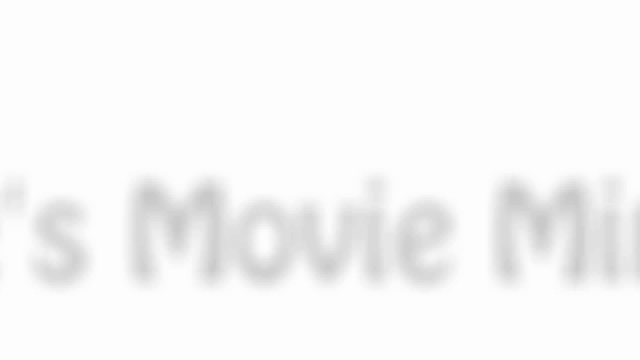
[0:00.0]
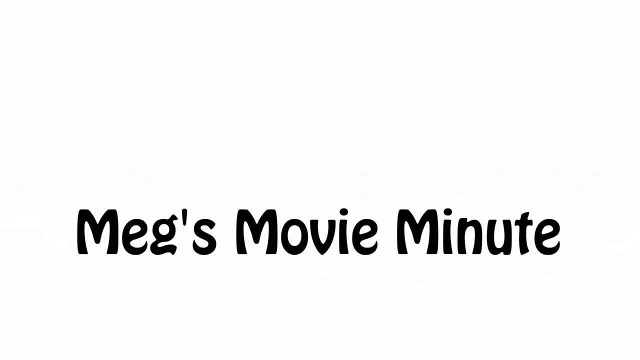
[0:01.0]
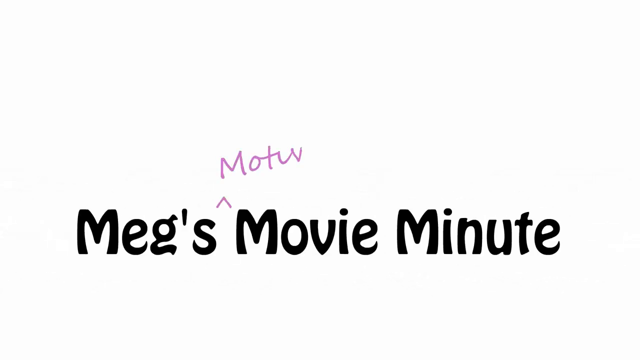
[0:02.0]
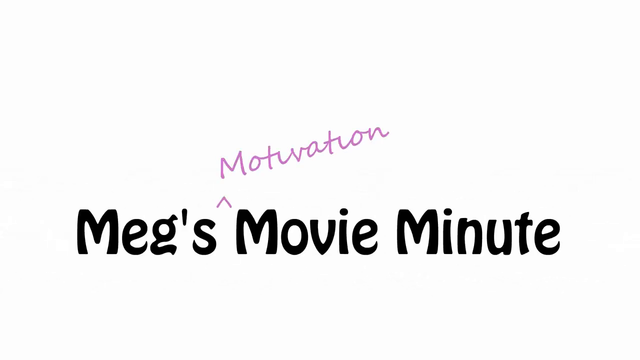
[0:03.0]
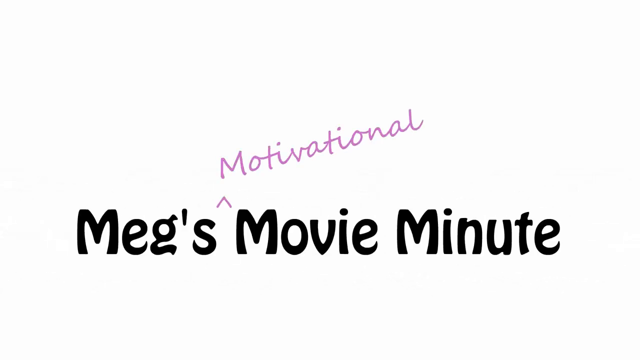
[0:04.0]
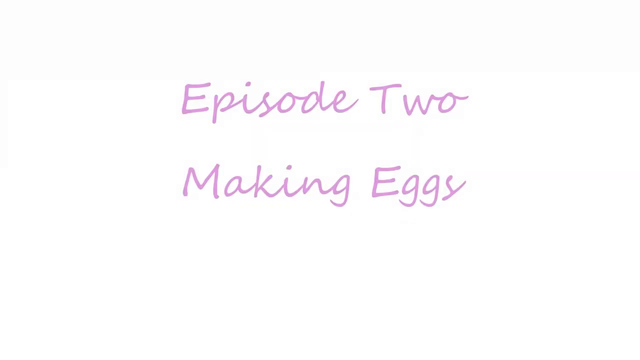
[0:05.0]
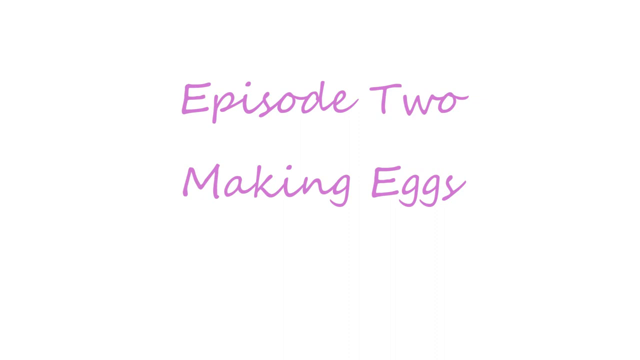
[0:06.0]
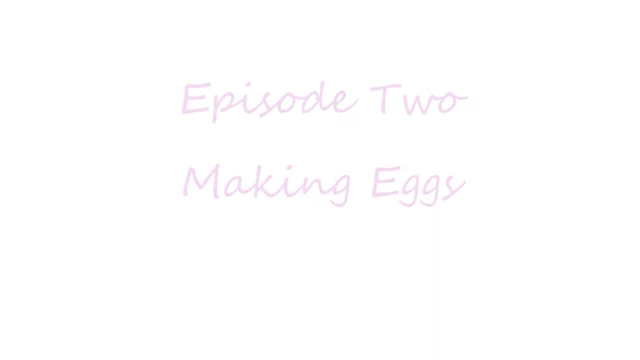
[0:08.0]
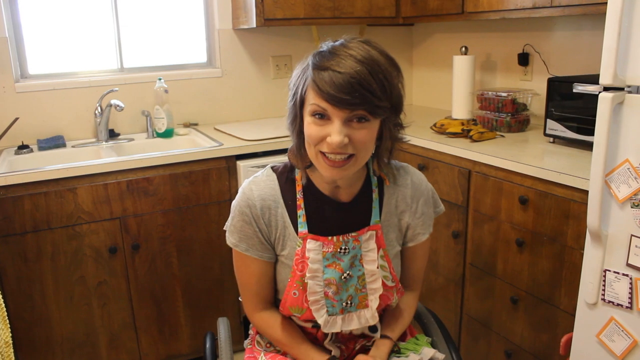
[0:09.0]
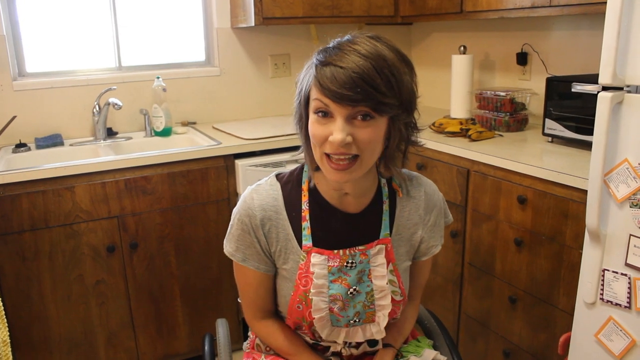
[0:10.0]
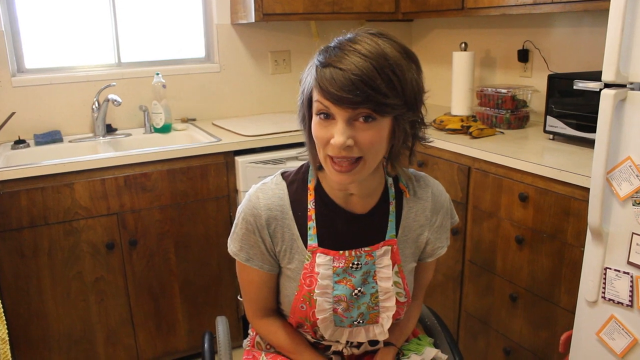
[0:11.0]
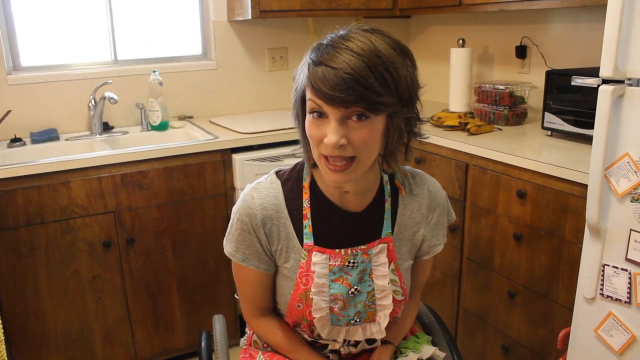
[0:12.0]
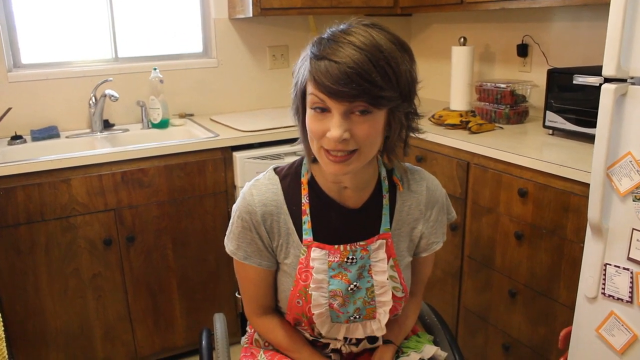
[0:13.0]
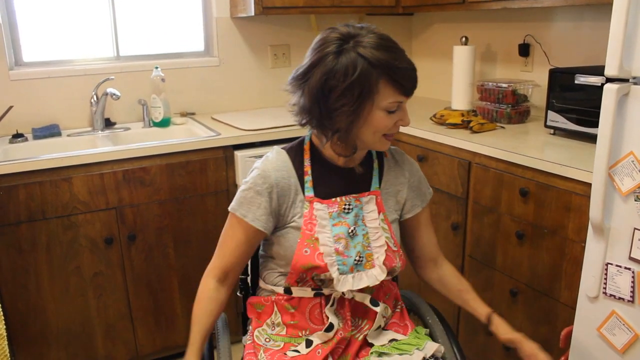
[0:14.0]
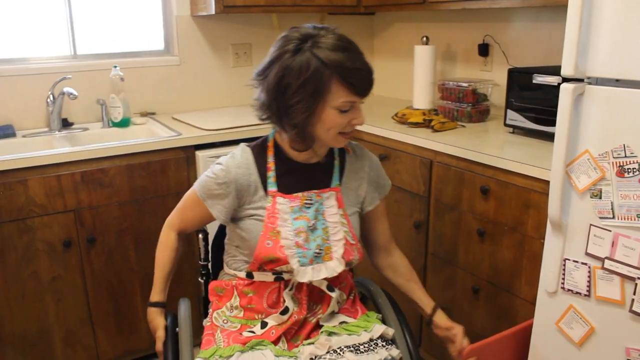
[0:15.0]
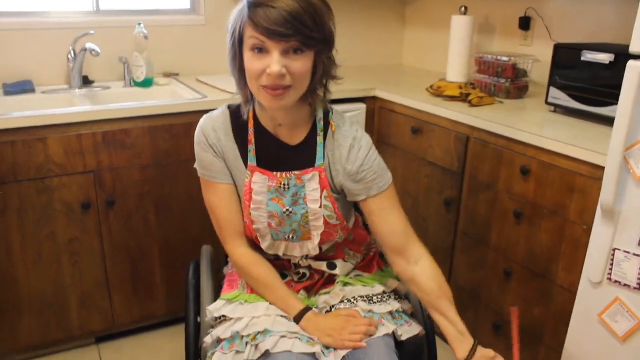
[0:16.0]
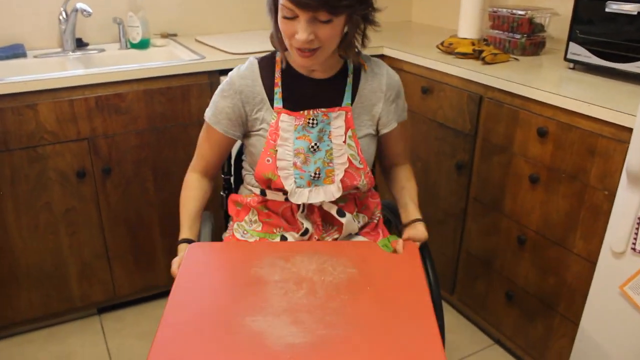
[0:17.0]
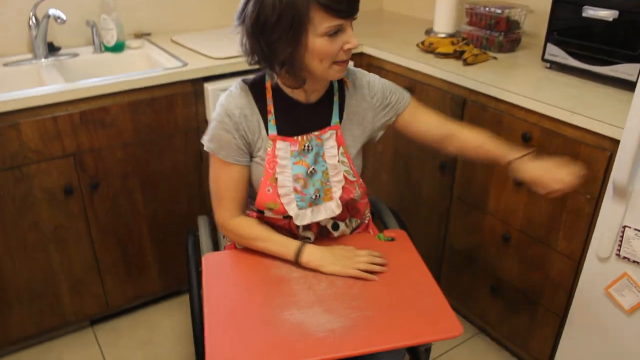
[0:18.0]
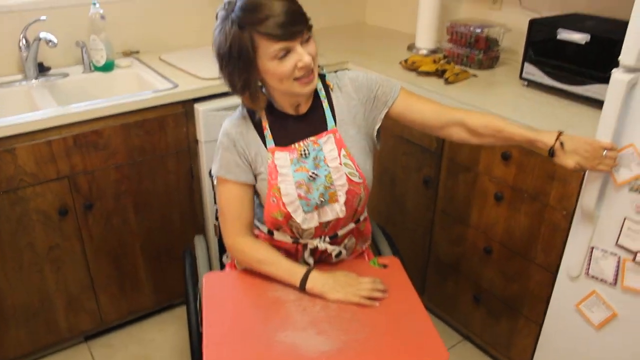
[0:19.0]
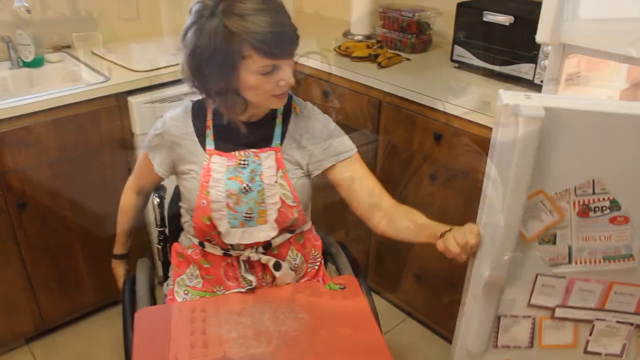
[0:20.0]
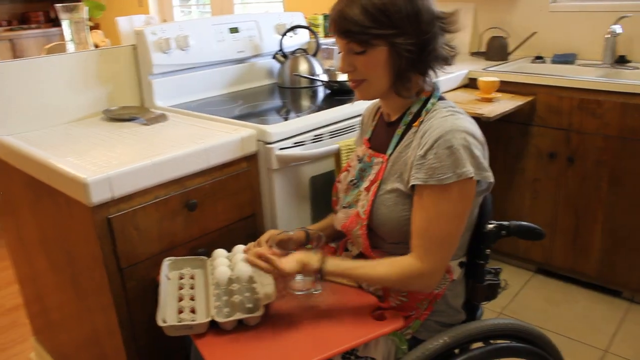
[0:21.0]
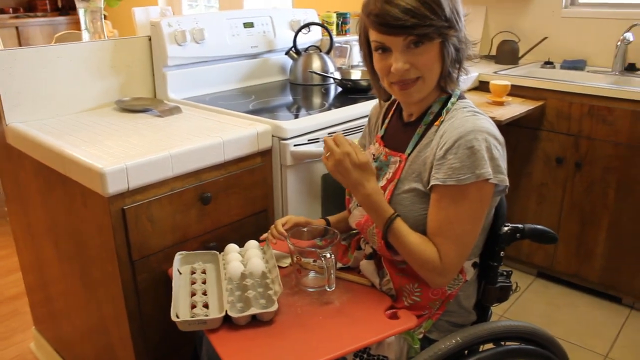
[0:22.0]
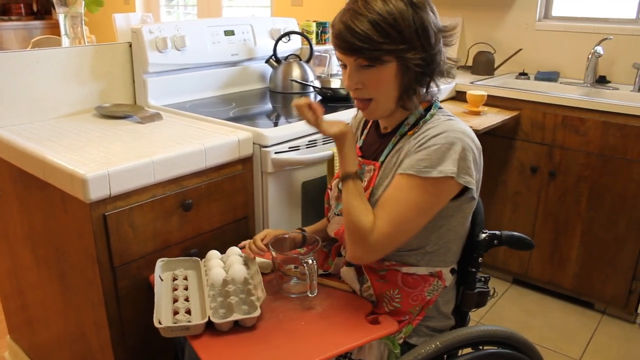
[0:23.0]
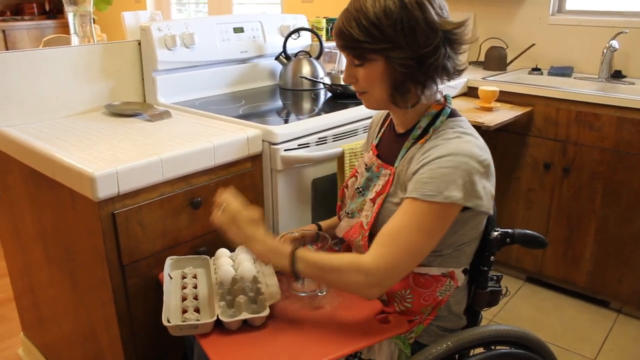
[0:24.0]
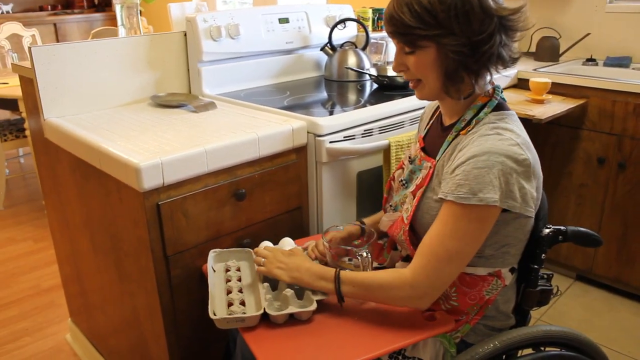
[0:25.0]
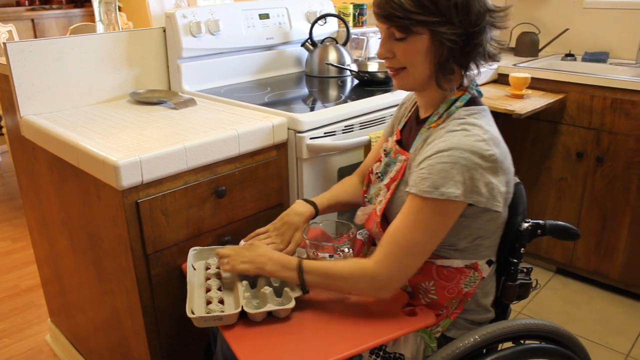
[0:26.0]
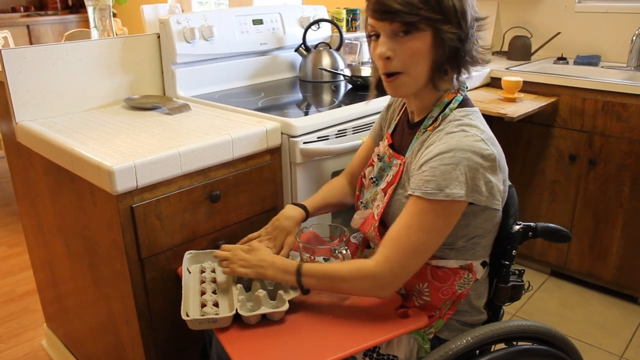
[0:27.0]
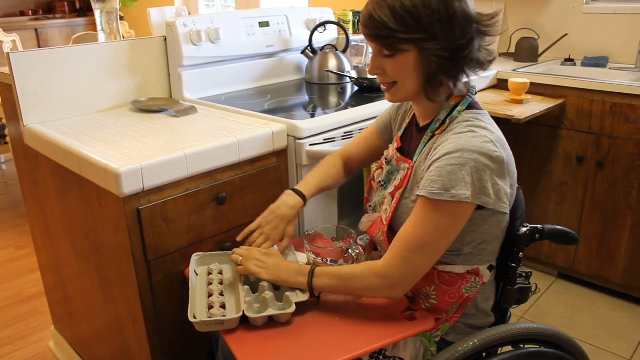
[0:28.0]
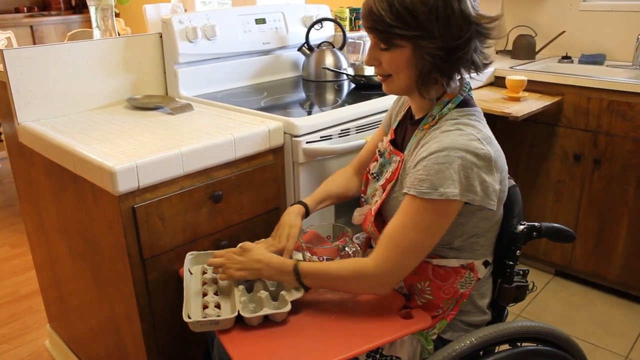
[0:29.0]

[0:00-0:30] The video opens on a white background with the text "Meg's Movie Minute" in black lettering, along with text in a different font reading "Motivational" in pink letters. The text disappears, and the same pink font then shows "Episode 2, Making Eggs." The video cuts to a woman in a kitchen talking to the camera. She has a short haircut and wears an apron over her clothes, and she looks like she is in a wheelchair. She grabs a cutting board and opens the fridge. After a transition, she is by the counter with eggs on top of her cutting board, along with a bowl or a measuring cup. She touches the eggs while still talking to the camera. The woman also appears to have a deformity in her hand, and the video shows how she makes eggs while being disabled.